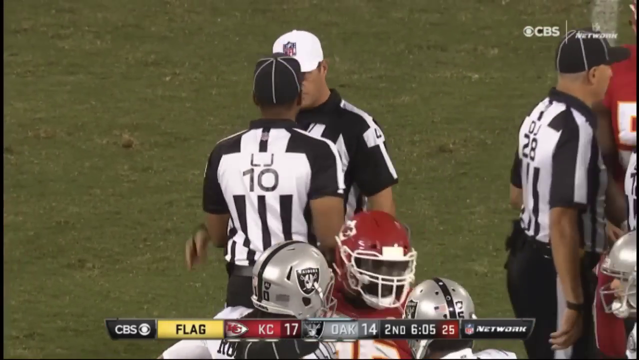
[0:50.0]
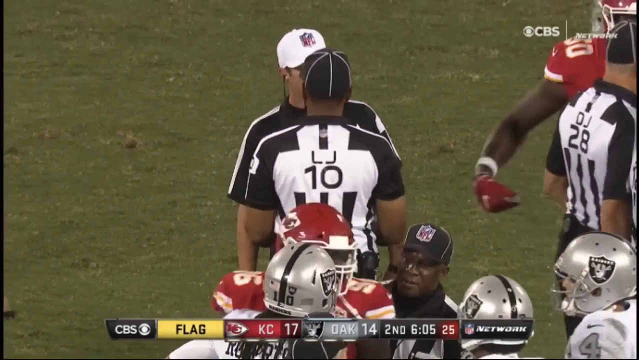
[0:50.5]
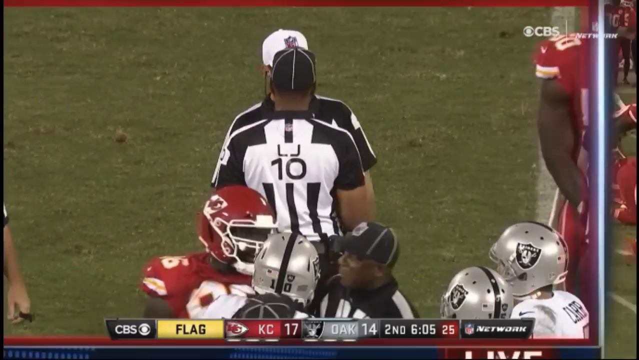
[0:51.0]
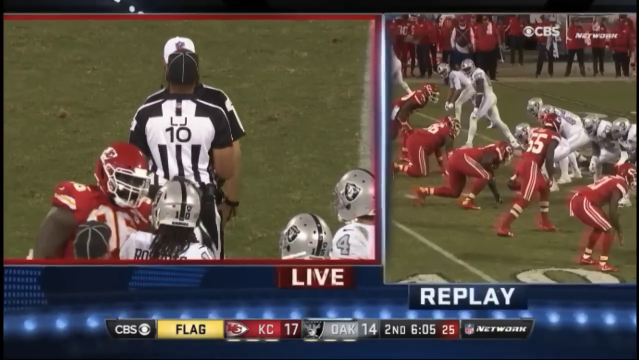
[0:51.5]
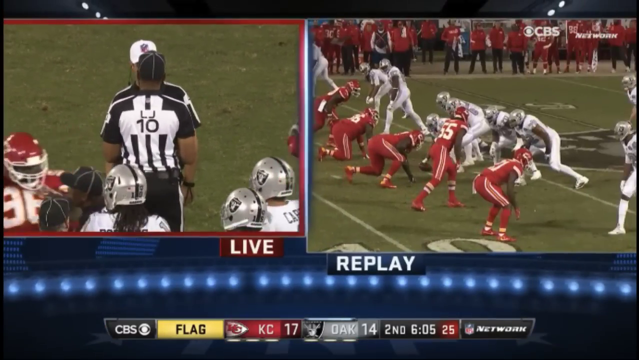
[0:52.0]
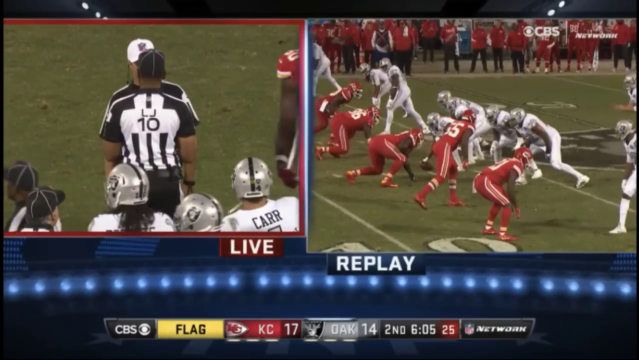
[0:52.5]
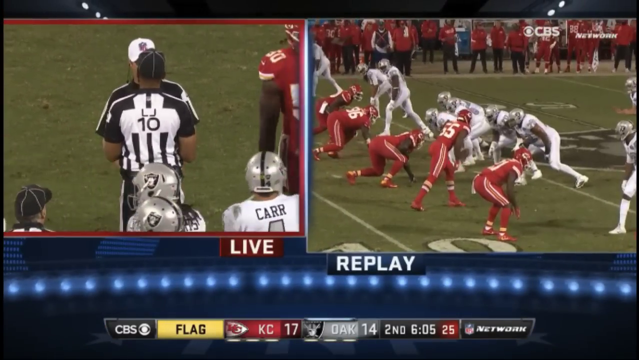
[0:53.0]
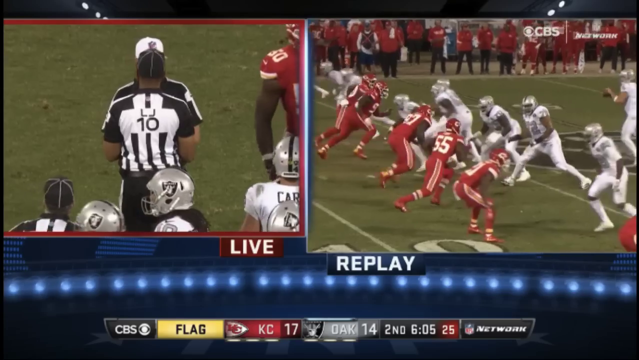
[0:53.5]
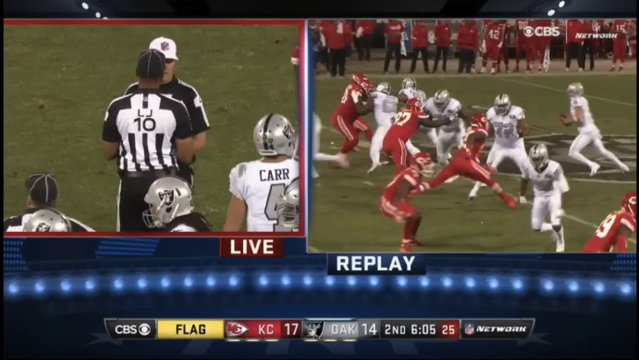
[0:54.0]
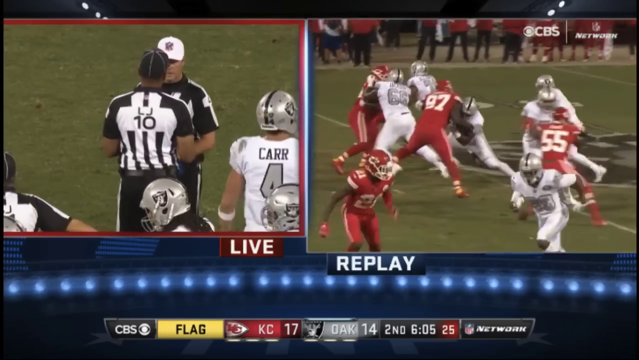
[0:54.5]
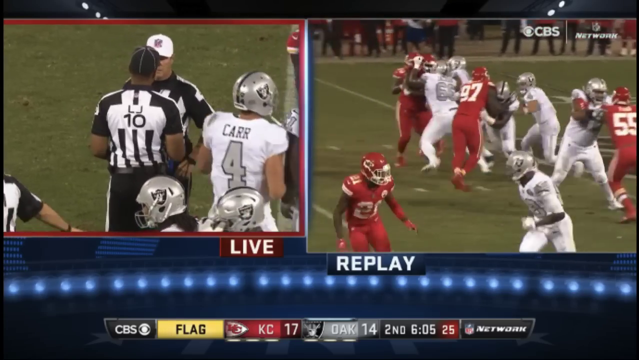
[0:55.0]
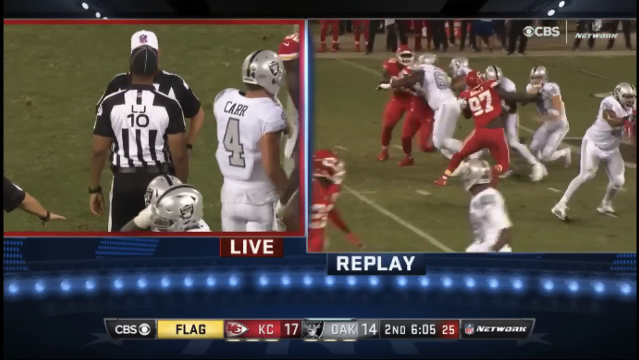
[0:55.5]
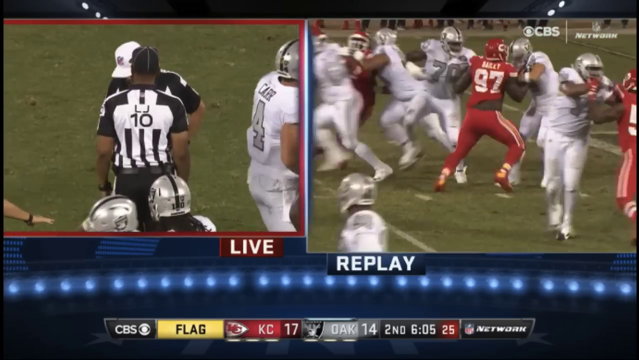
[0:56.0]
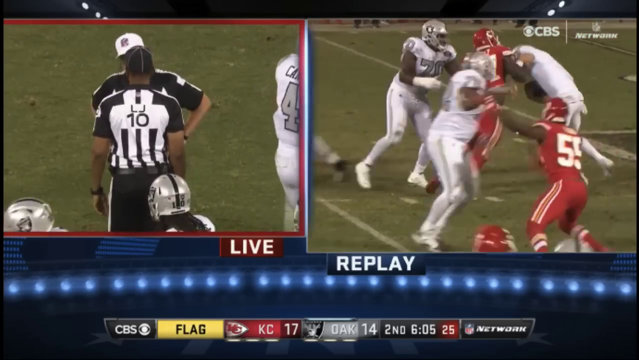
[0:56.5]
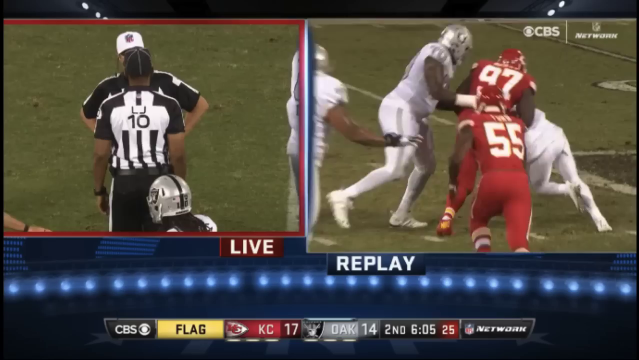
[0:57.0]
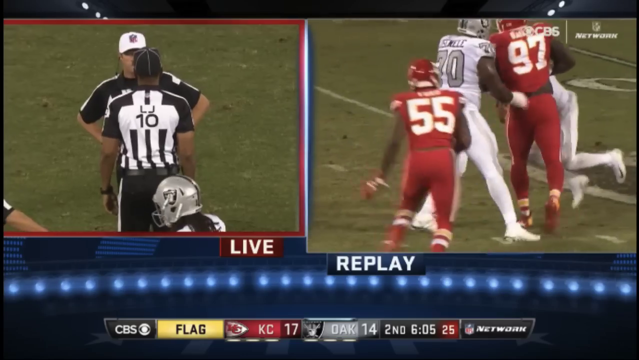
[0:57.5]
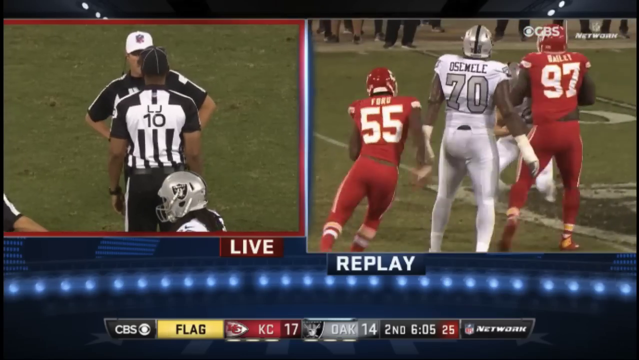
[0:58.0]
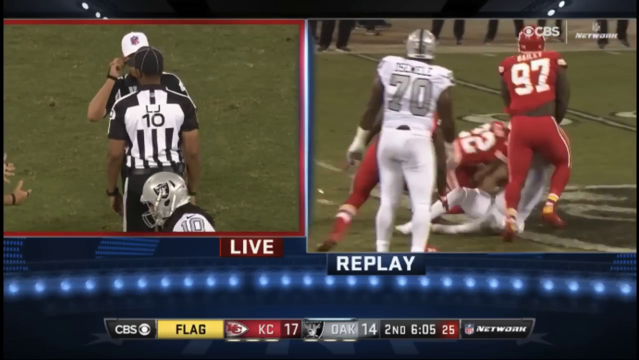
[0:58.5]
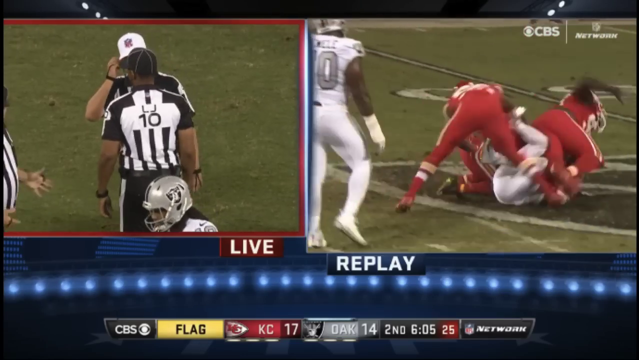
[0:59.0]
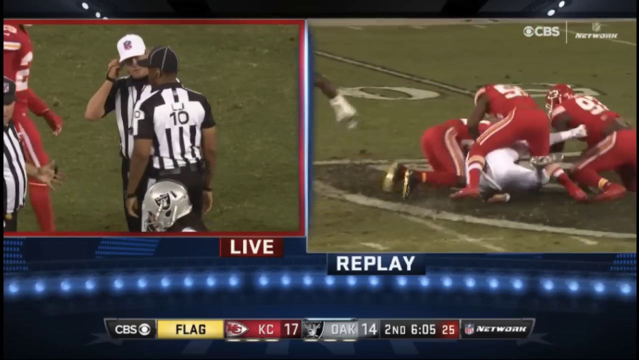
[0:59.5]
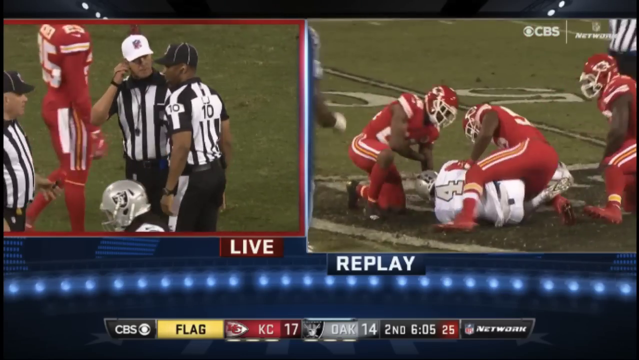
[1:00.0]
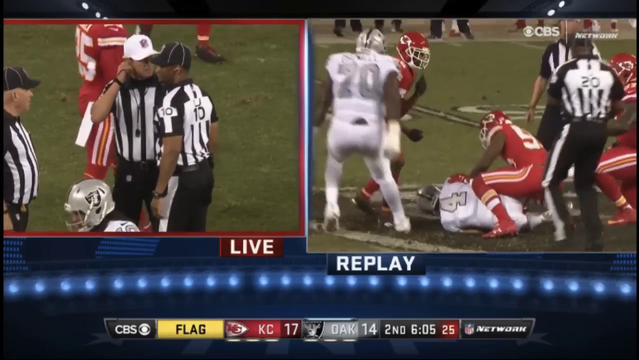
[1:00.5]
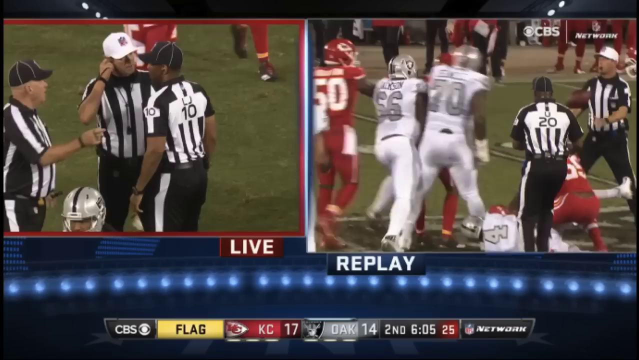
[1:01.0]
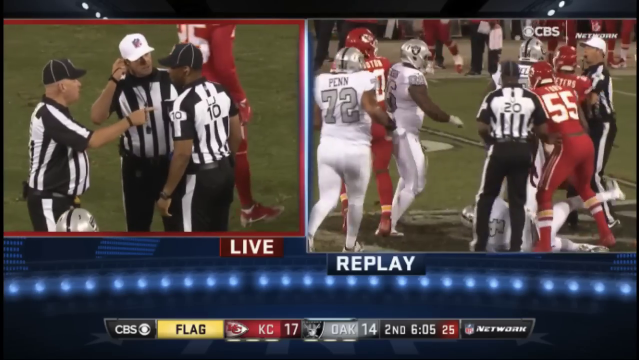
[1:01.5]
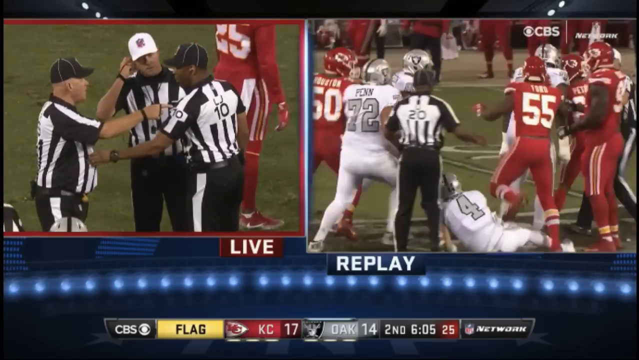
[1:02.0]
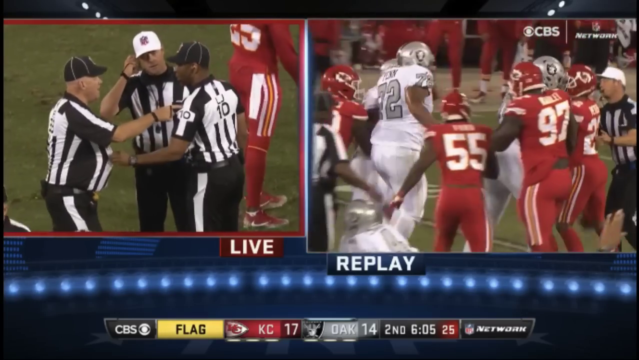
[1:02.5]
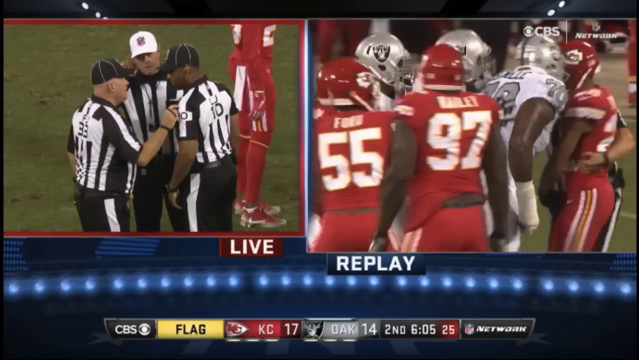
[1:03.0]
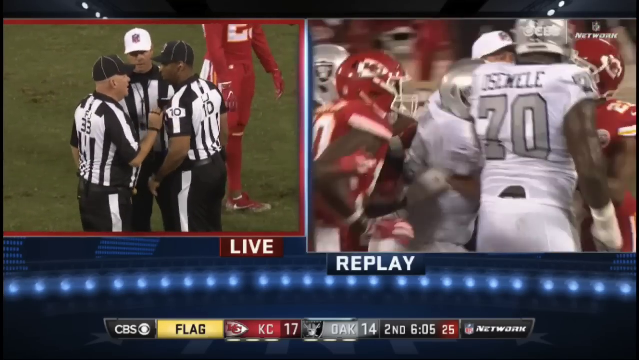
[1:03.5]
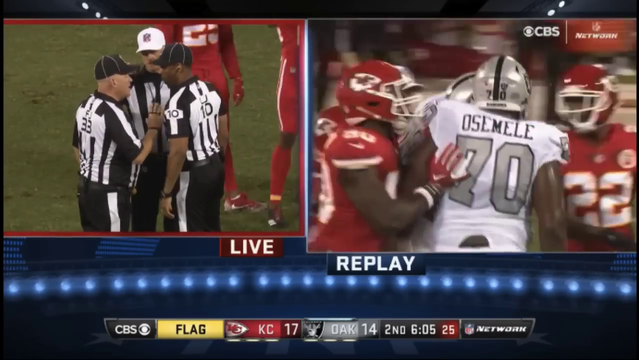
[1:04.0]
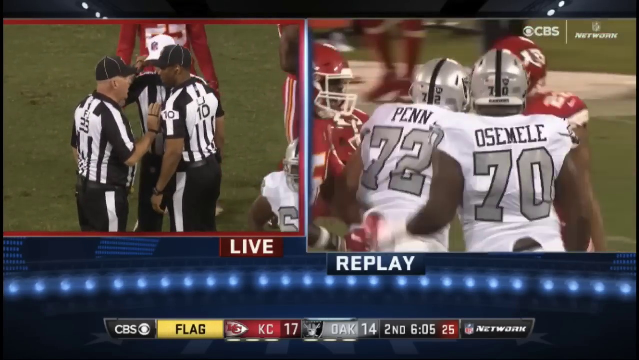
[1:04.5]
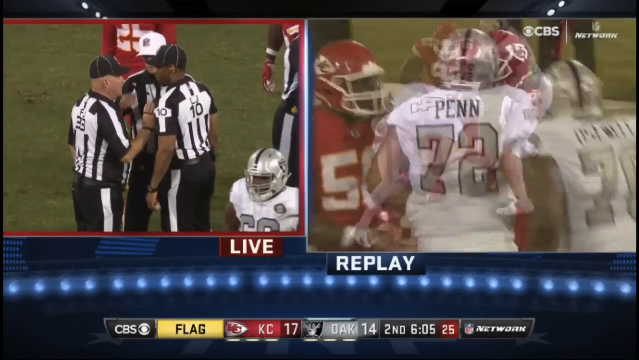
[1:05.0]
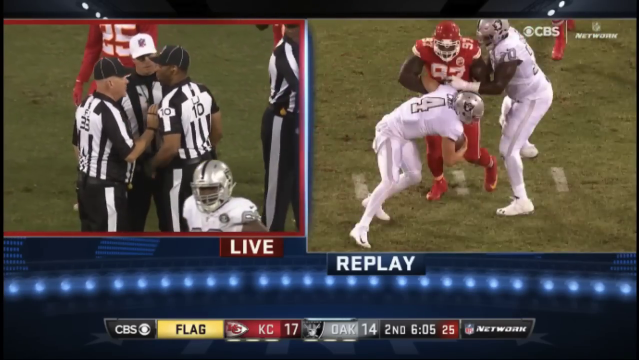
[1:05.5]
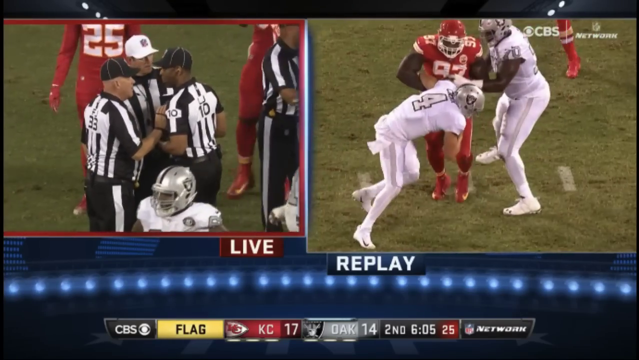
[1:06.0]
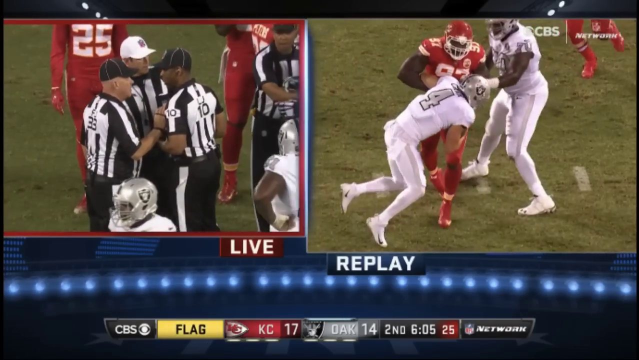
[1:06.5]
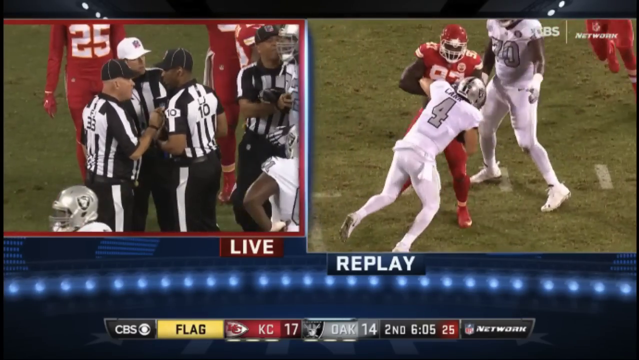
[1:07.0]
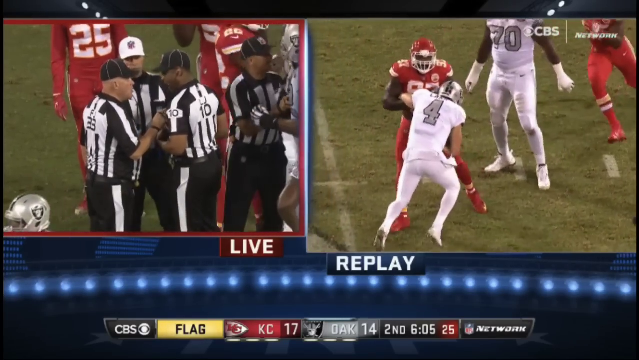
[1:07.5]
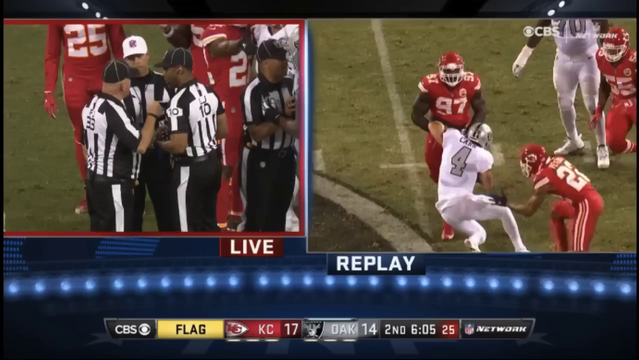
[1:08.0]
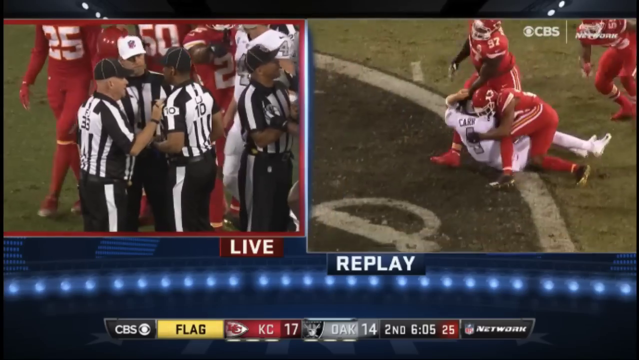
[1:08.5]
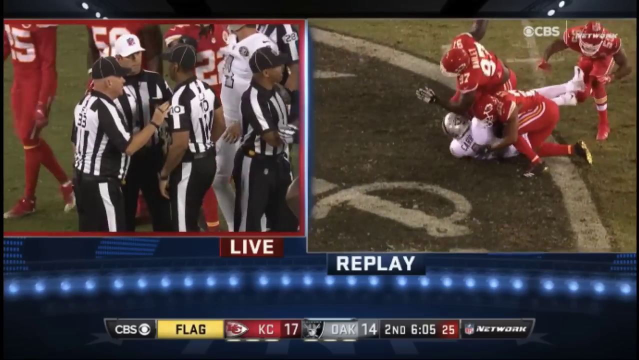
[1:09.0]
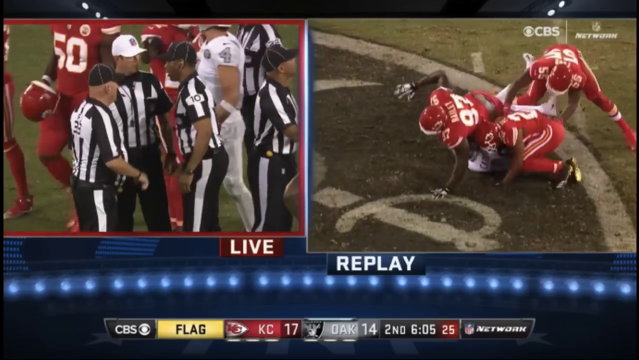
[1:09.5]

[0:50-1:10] The video is titled Marshawn Lynch Gets Ejected for Grabbing a Referee, Chiefs vs. Raiders NFL. It shows the initial altercation between the Chiefs and the Raiders after a play; the referees get involved, number 24 on the Raiders grabs at a referee, and the referee pulls a yellow flag up and out of his pocket. More referees enter the field and talk with individual players about the play. Number 24 on the Raiders leaves the field as the referees discuss how to proceed. Along the bottom of the video is the scoreboard, showing Kansas City Chiefs 17 points vs. Oakland Raiders 14 points. In a split screen, the referees speak in a huddle on the left while the initial altercation between Chiefs and Raiders players plays on the right. Up-close shots follow of the coaches for both the Chiefs and the Raiders speaking to referees and their players. The broadcast is on CBS. Finally, the referee comes to the middle of the field and uses hand signals to announce the final call for the play.